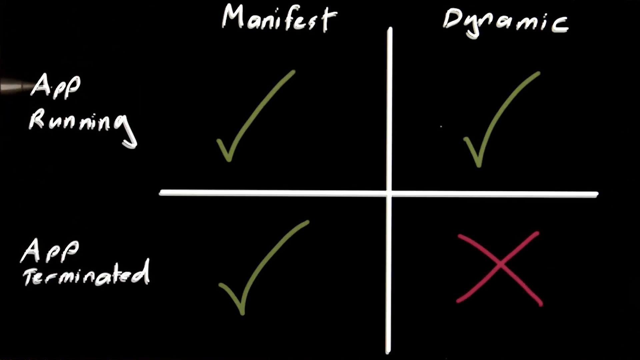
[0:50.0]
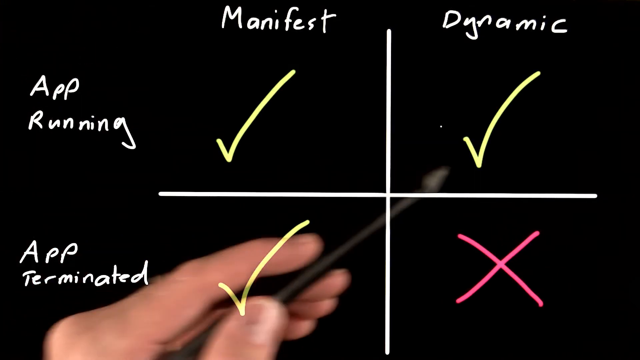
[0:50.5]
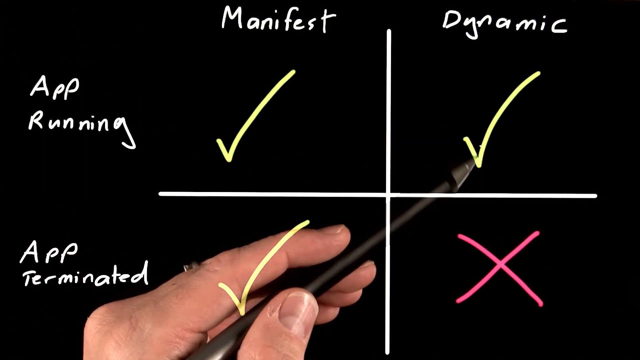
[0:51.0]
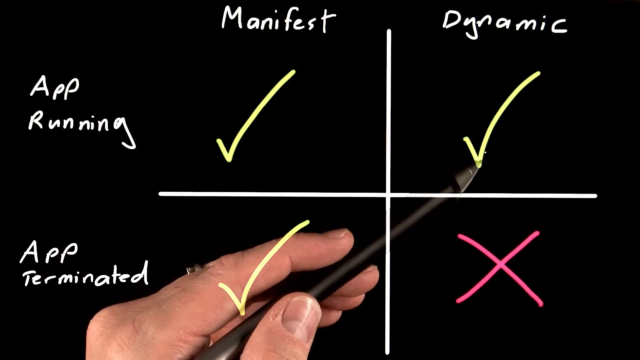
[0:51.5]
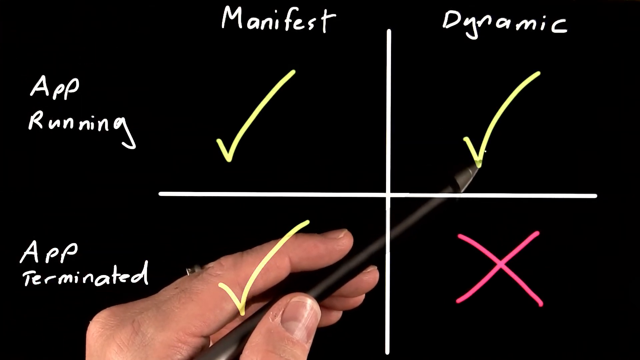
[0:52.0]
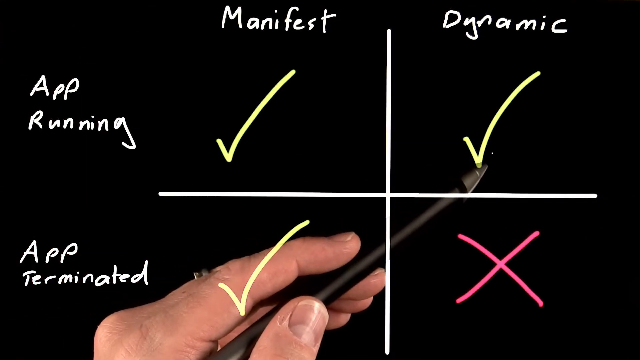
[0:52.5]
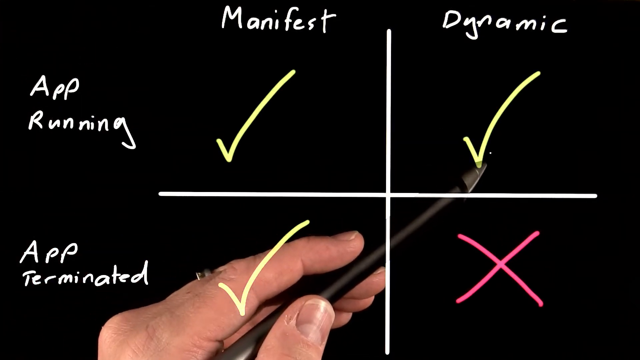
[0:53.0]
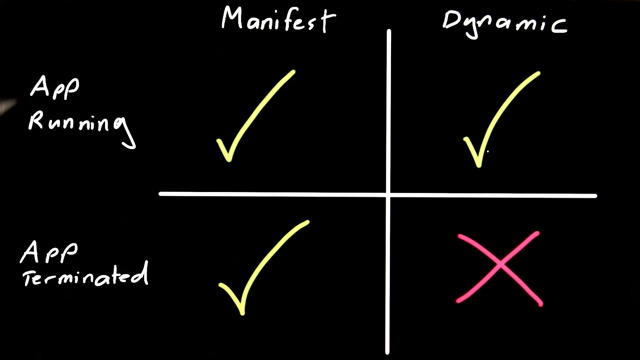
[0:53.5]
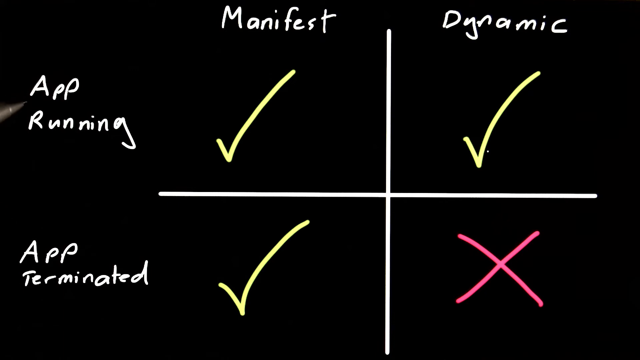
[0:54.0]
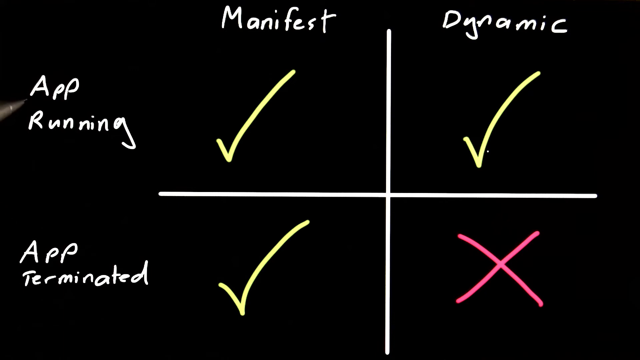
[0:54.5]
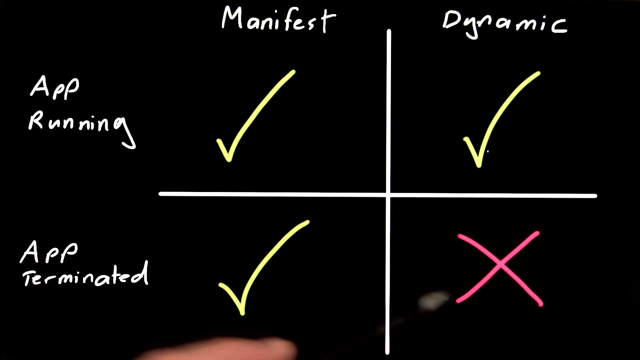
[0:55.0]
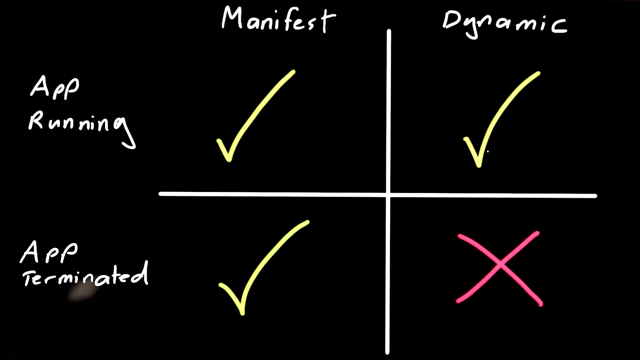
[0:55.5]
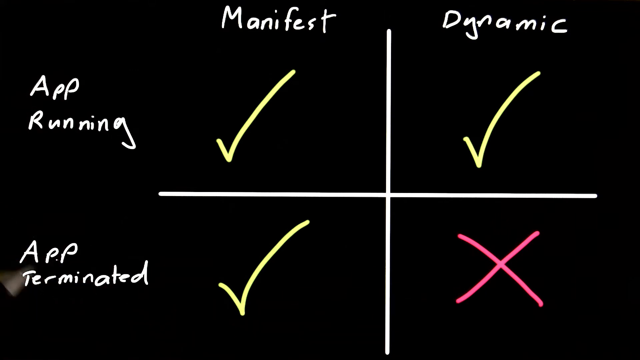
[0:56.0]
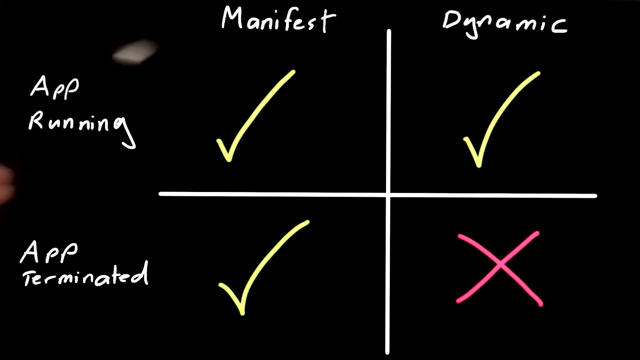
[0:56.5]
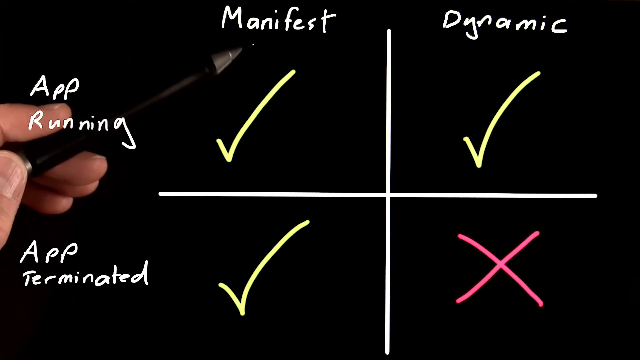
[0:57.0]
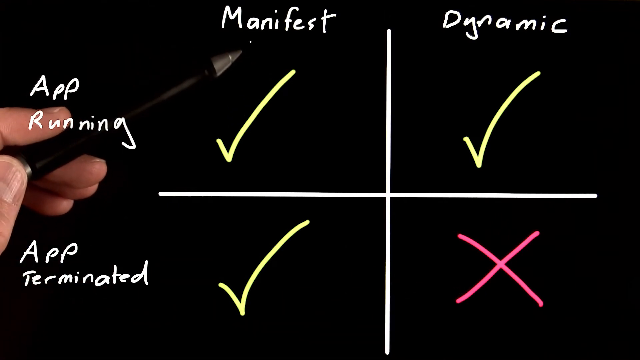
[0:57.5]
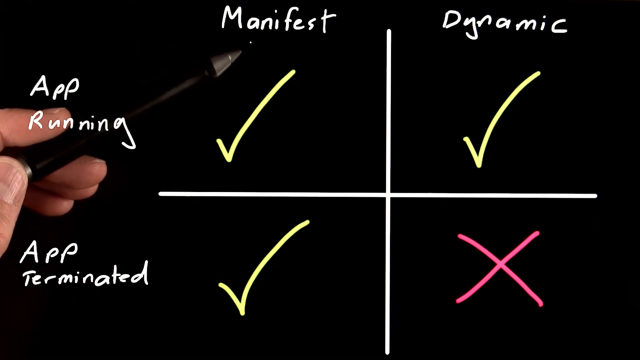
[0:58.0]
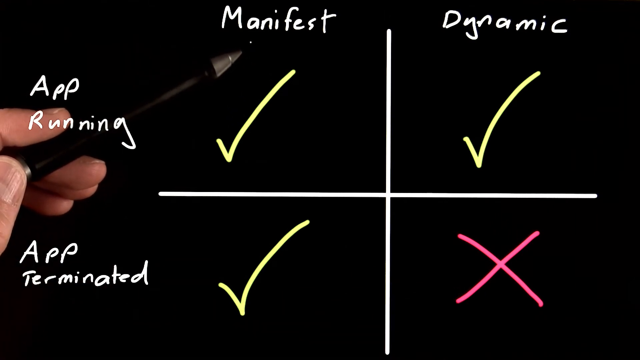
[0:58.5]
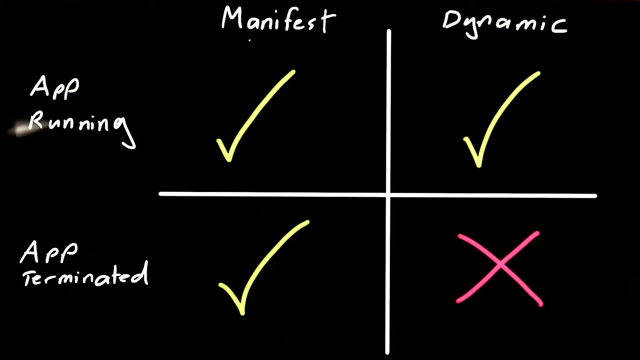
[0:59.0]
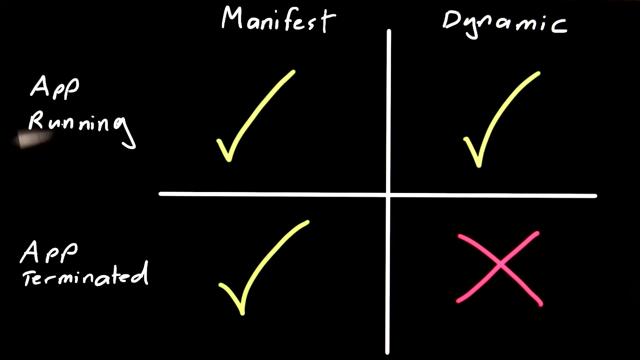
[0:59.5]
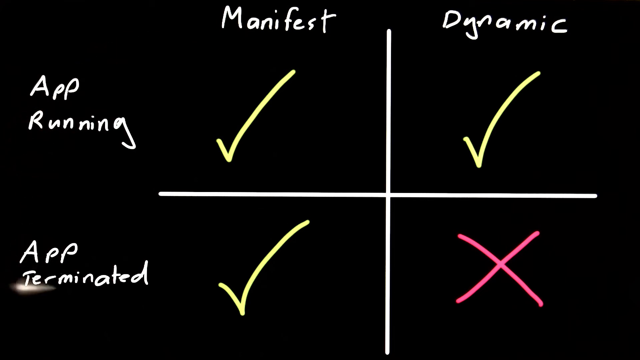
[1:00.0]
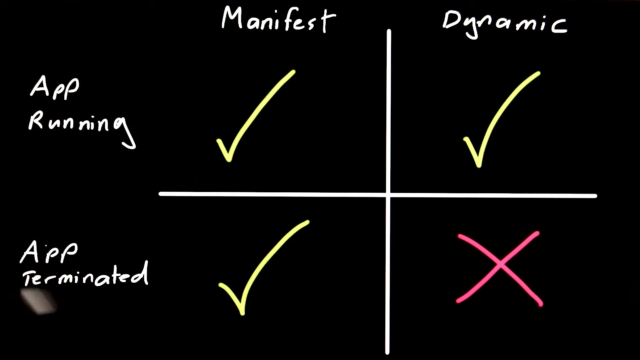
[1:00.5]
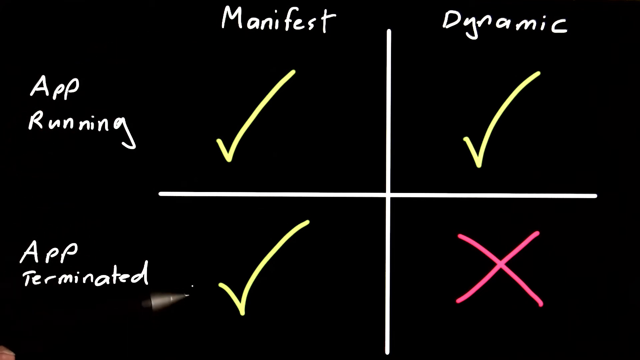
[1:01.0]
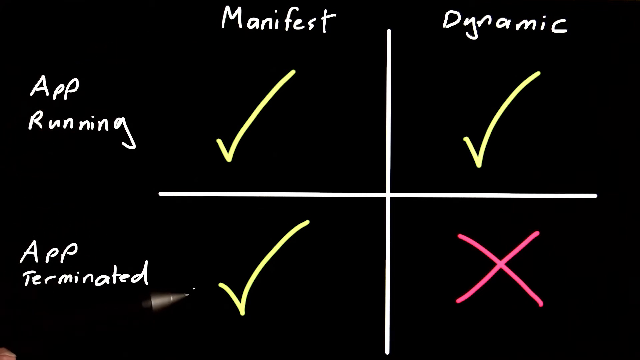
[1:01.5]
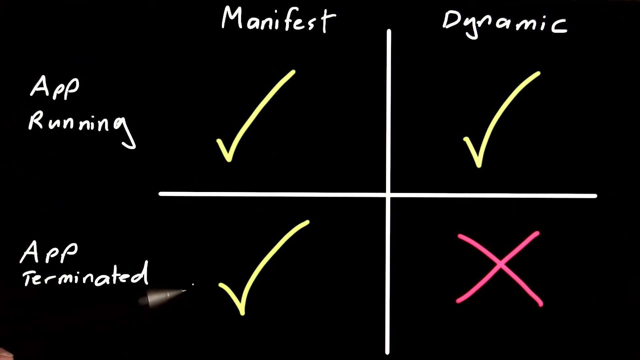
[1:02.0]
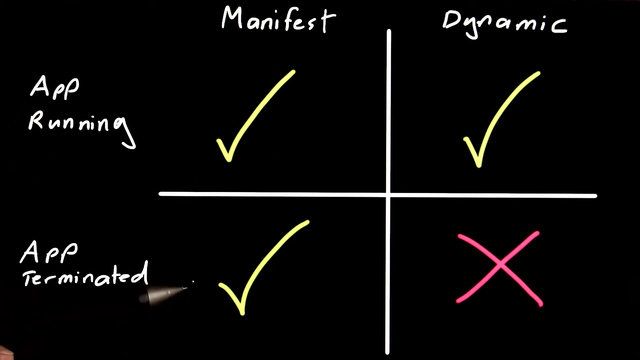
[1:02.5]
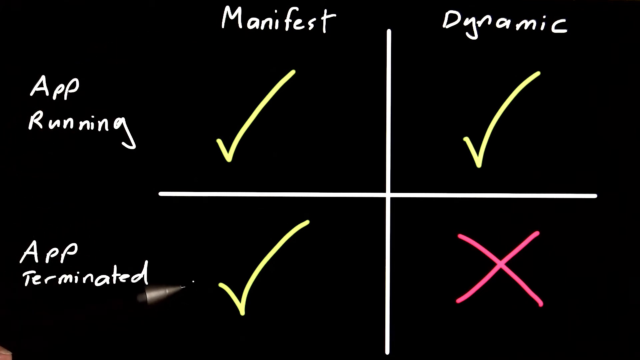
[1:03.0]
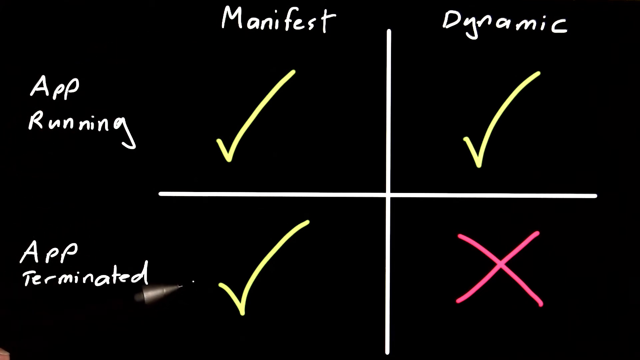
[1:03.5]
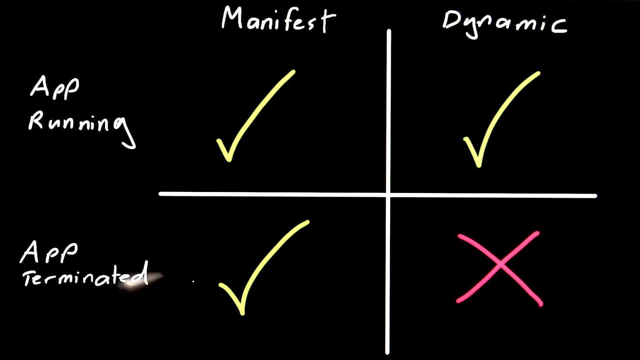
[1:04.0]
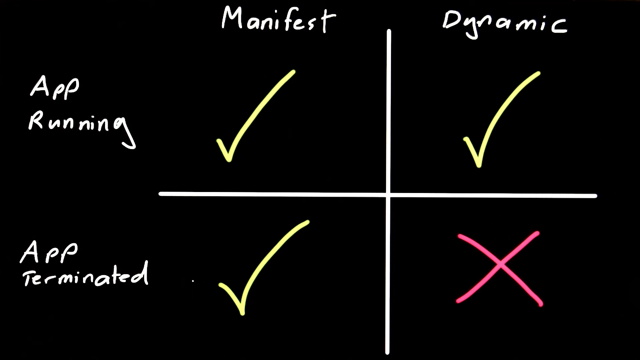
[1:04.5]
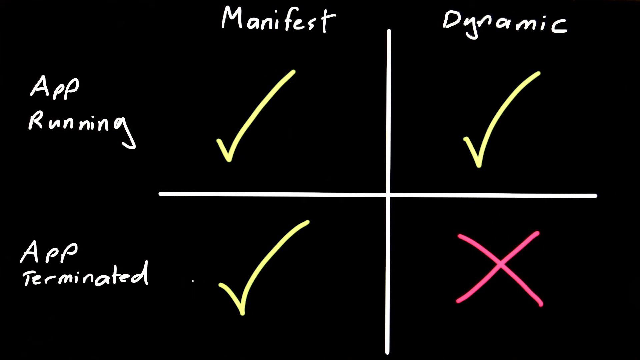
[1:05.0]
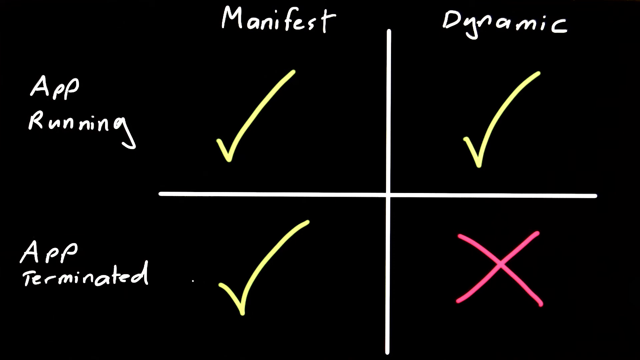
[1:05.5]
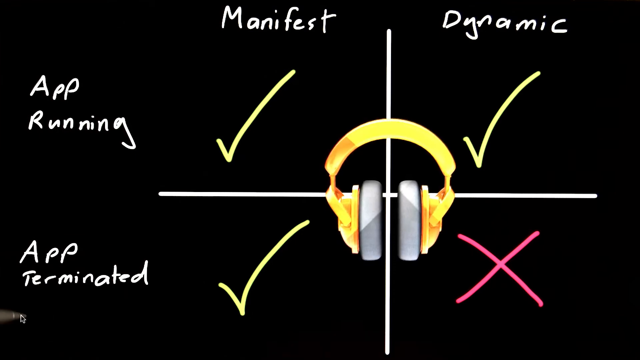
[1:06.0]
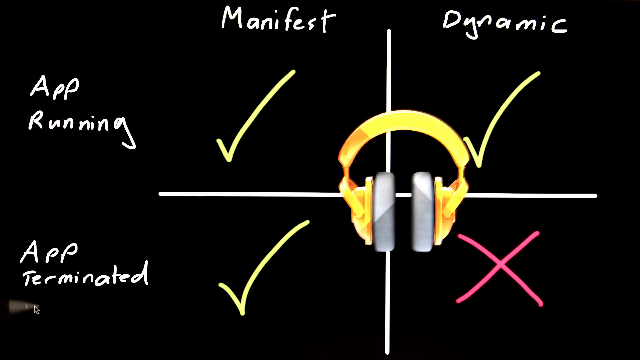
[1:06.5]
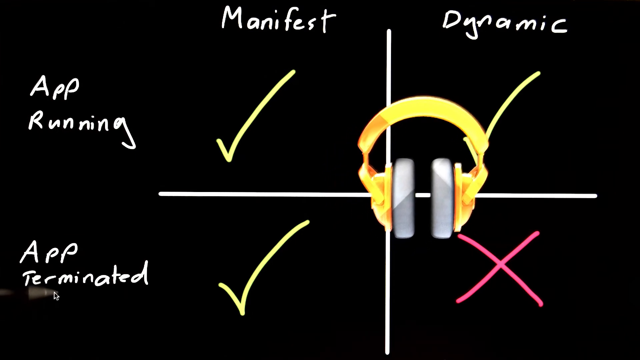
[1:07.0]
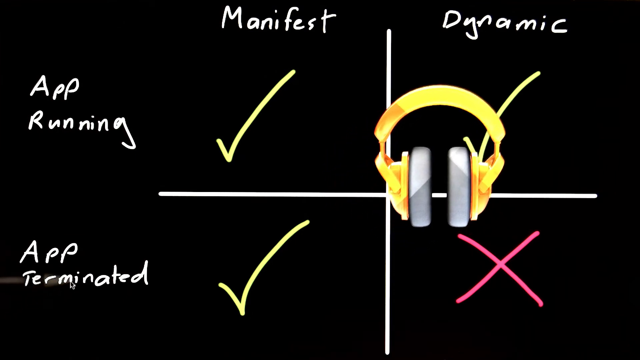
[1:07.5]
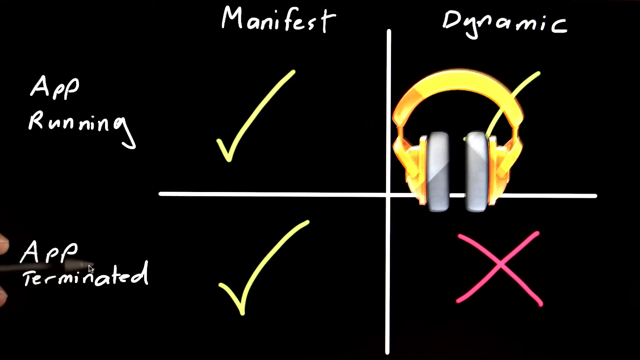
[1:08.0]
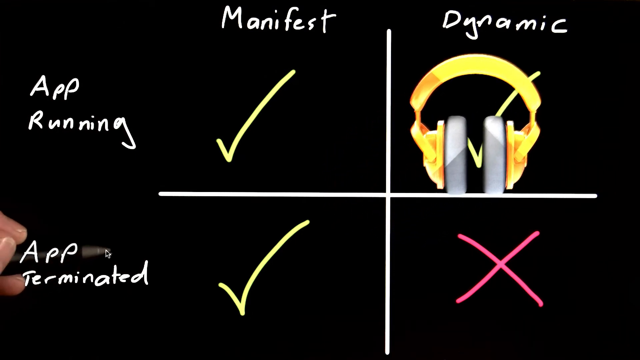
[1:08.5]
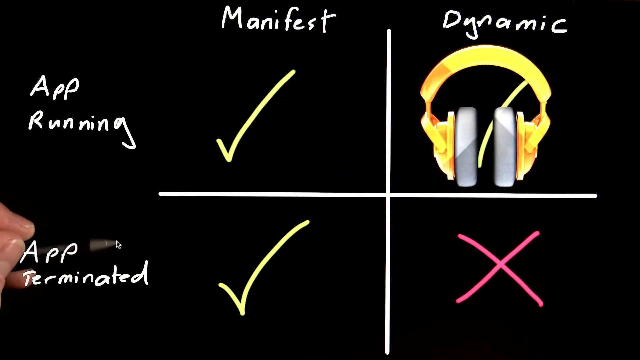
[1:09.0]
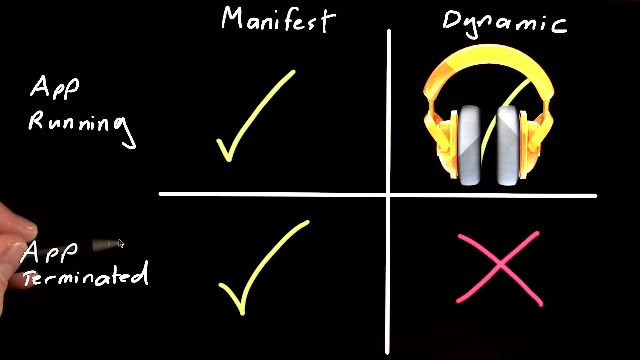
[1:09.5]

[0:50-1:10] Text is on the screen, along with a square or cross in the center that creates four squares, with titles on the top and sides reading "Manifest," "Dynamic," "App Running," and "App Terminated." Across from "App Running" there are two green check marks, and across from "App Terminated" there is one green check mark and a red X, so all the boxes are filled in with either check marks or an X. A person's hand moves in from the left over to the right, holding a pen, and uses it to point out different points on the screen in the background, setting a little white dot with the tip on different areas. Eventually a pair of headphones is superimposed onto the very center of the cross. The pen, which apparently acts as a mouse pointer, then moves the headphones up to the upper right box, the one with a green check mark underneath "Dynamic" and across from "App Running."